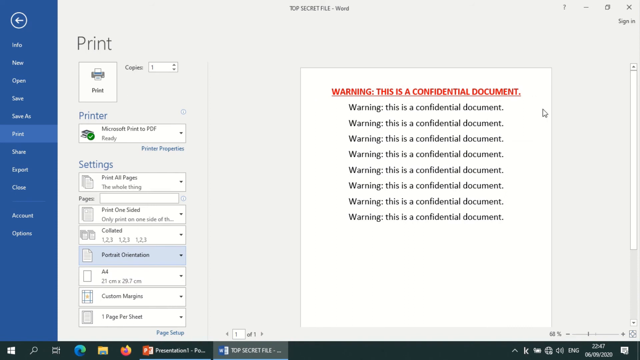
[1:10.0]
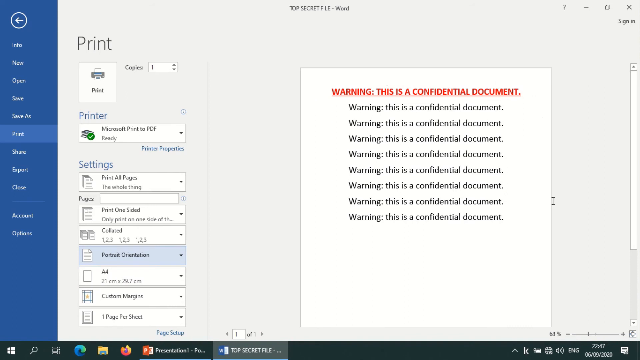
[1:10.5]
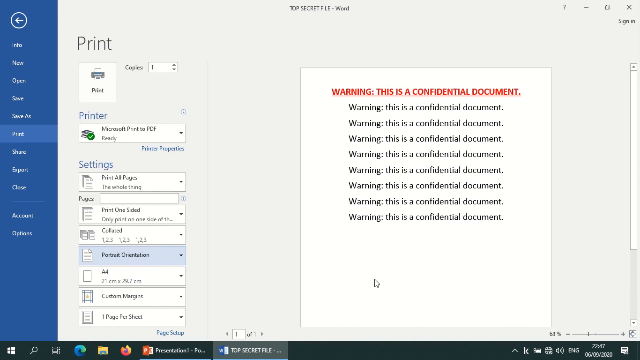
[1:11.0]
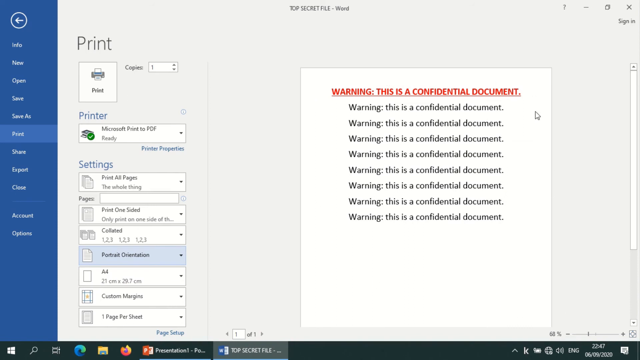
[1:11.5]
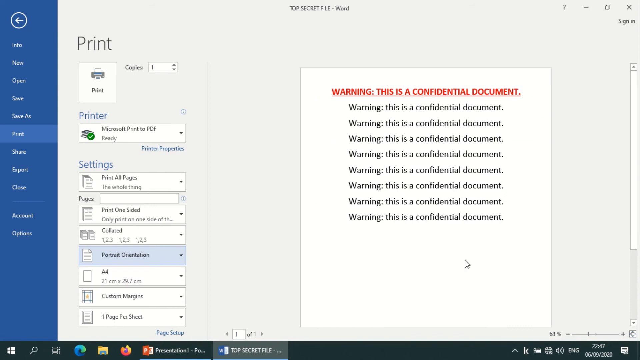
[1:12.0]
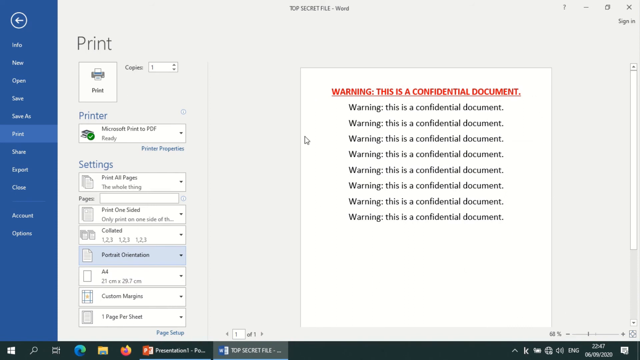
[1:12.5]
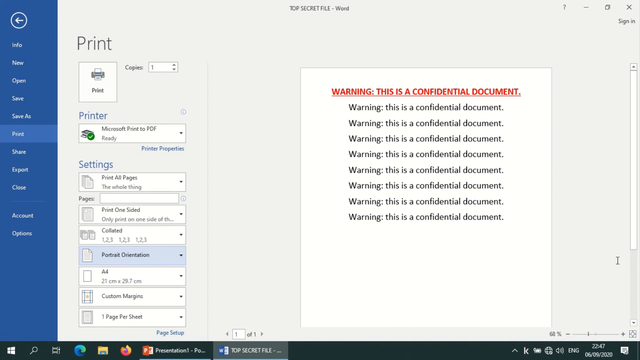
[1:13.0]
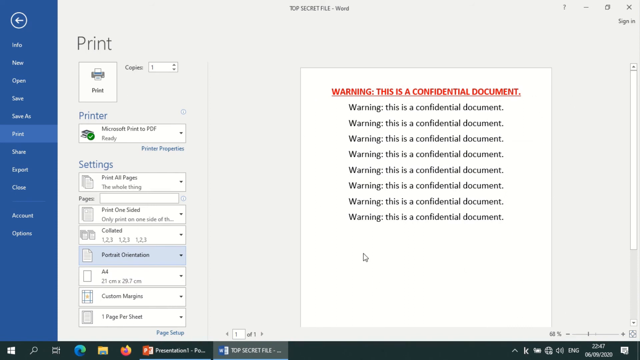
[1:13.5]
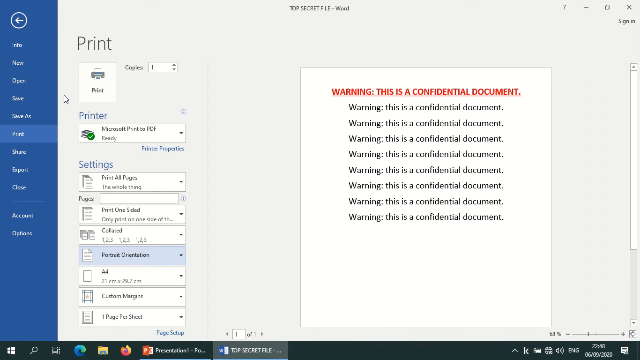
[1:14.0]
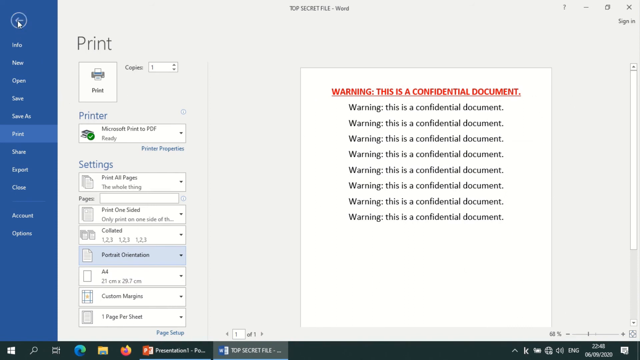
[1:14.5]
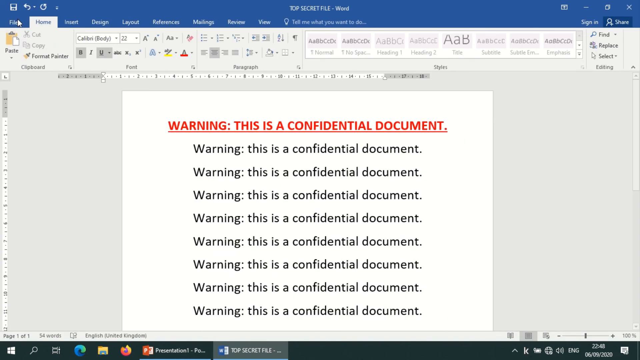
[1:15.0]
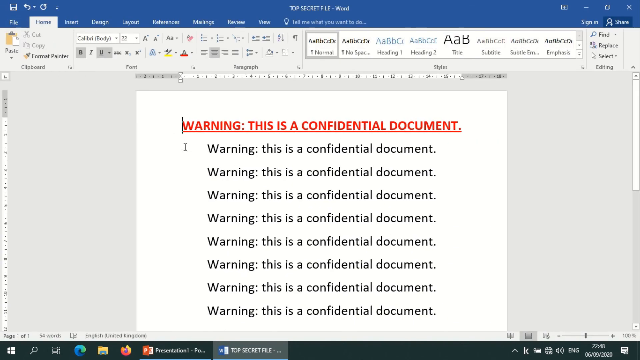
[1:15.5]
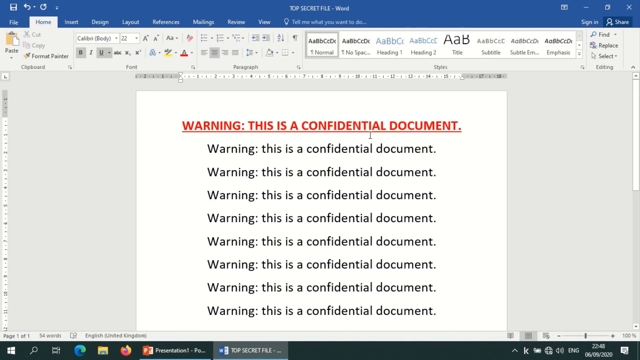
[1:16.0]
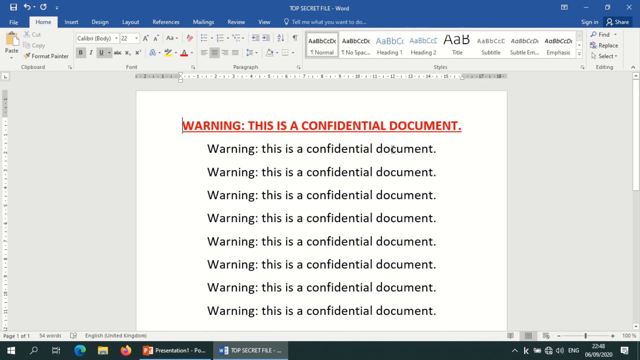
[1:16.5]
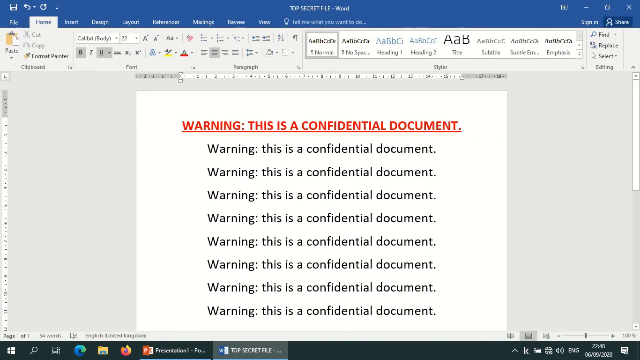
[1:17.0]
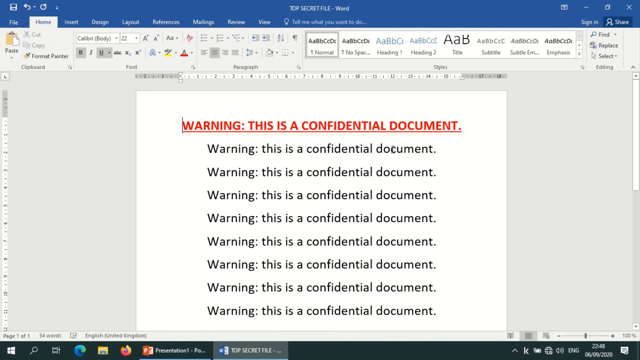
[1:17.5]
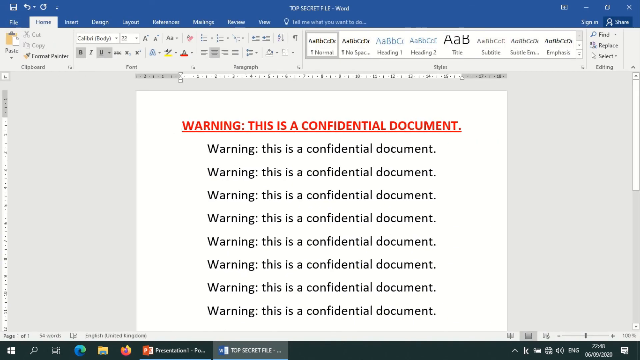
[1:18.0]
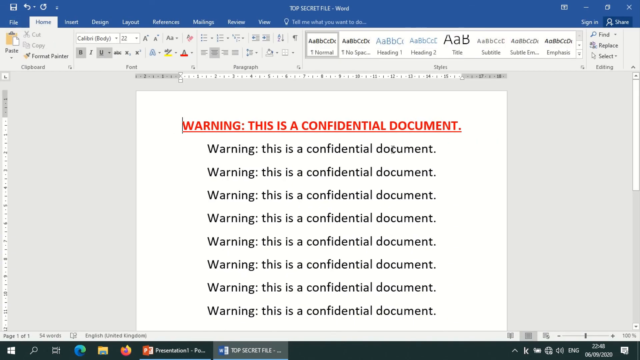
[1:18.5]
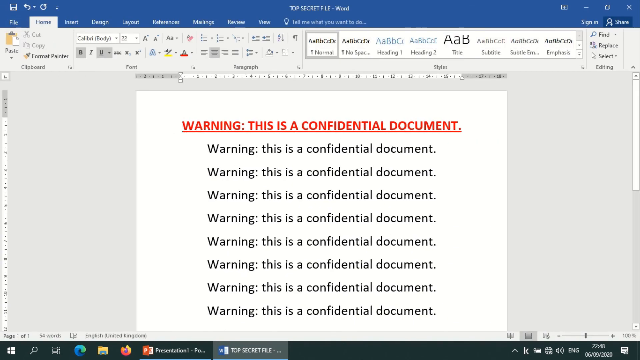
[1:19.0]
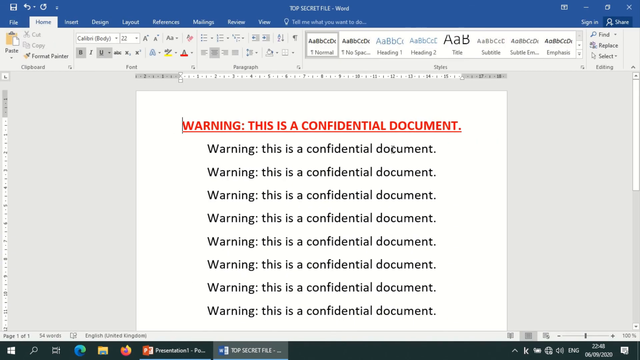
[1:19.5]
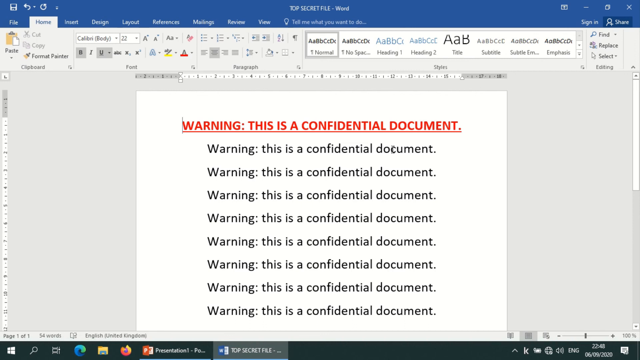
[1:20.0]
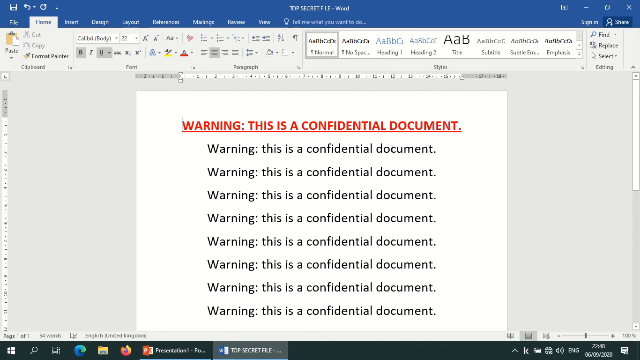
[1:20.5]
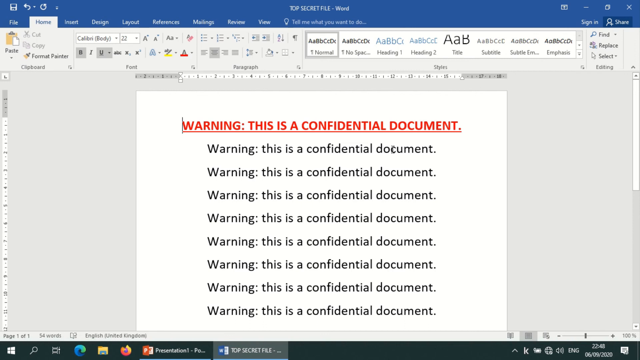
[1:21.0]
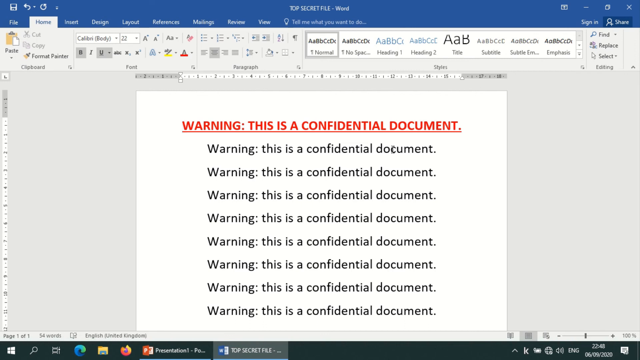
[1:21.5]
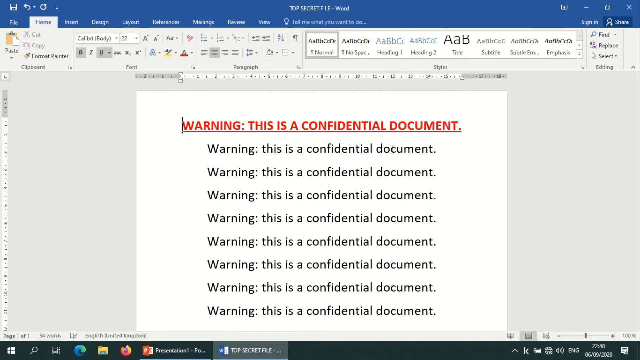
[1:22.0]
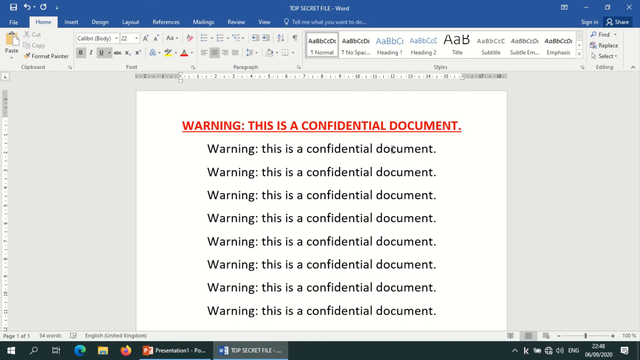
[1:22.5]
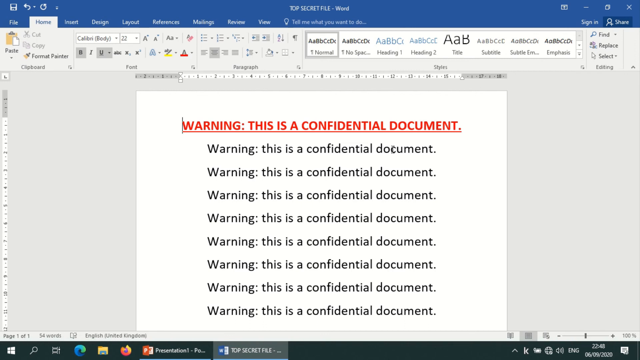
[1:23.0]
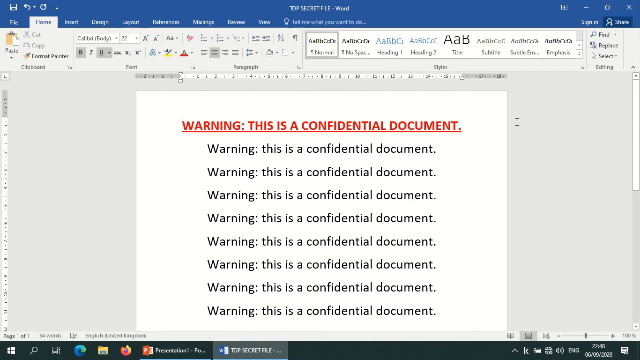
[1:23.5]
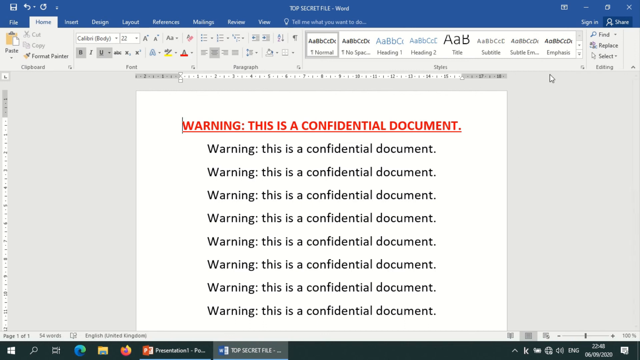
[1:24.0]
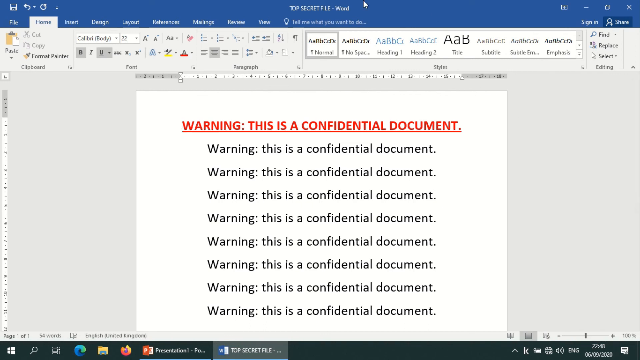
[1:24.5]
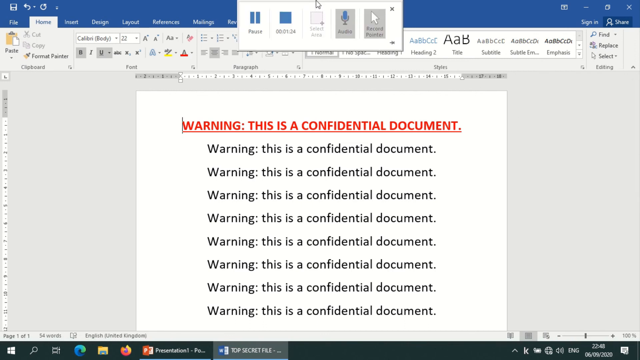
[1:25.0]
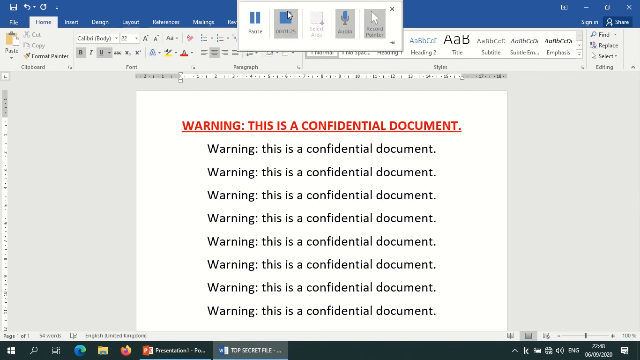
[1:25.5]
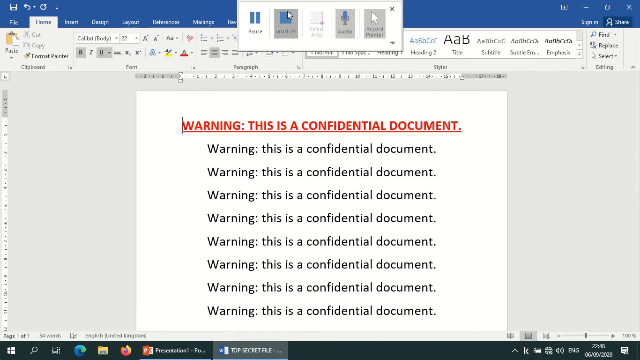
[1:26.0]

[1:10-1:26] The document is still open in Microsoft Word, showing the text "This is a confidential document." The Word interface displays the Home, Insert, Design, Layout, References and Mailings tabs, along with bold, italics and underline buttons, the paste button, the File menu, save, redo and undo buttons, align left, align right and center buttons, and the page ruler. The user apparently then ends the screen recording.